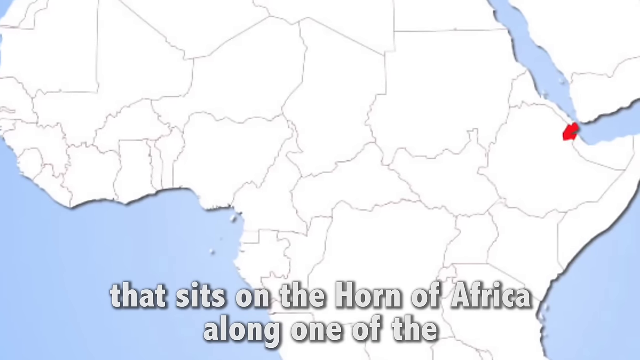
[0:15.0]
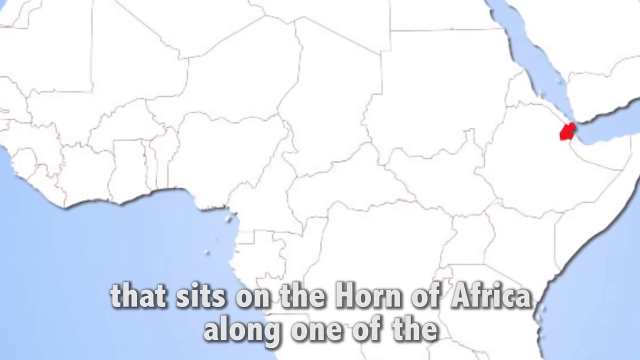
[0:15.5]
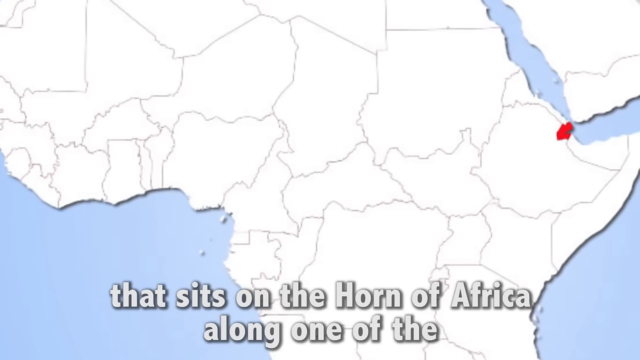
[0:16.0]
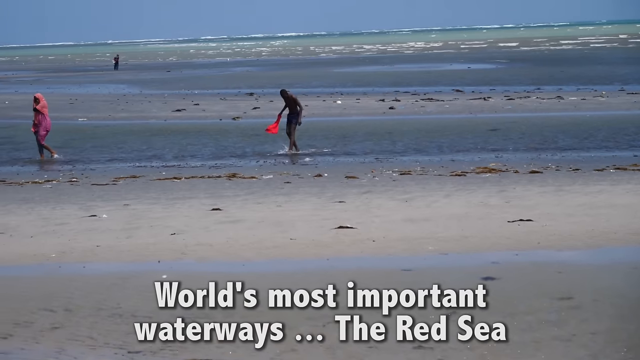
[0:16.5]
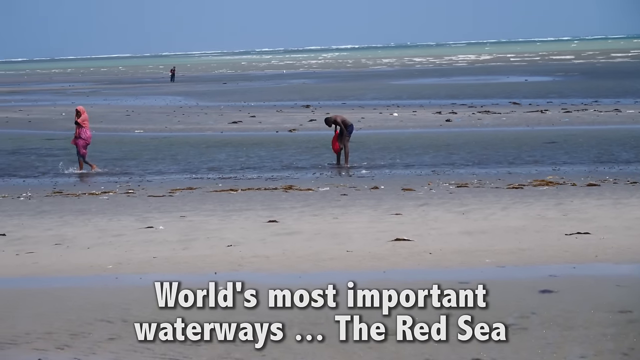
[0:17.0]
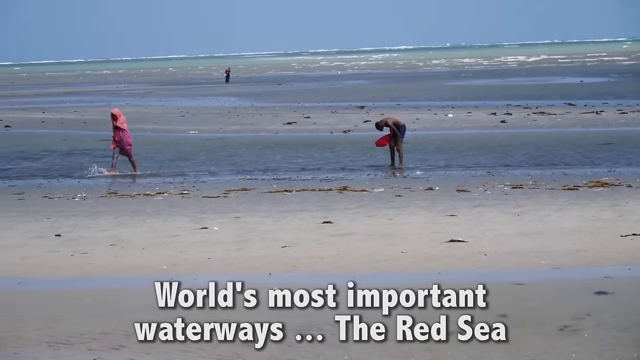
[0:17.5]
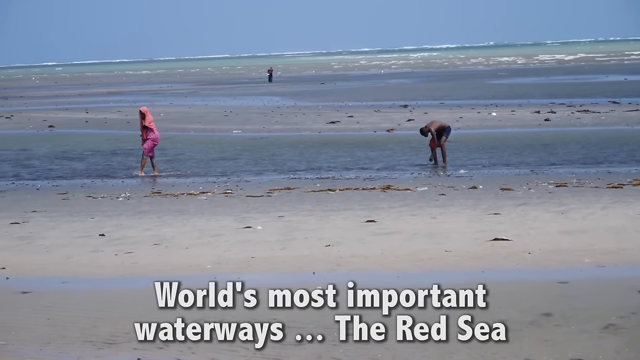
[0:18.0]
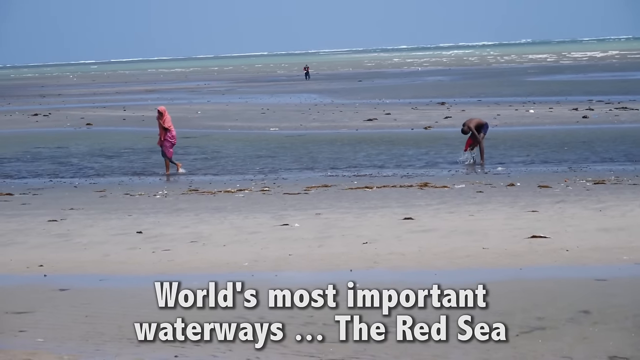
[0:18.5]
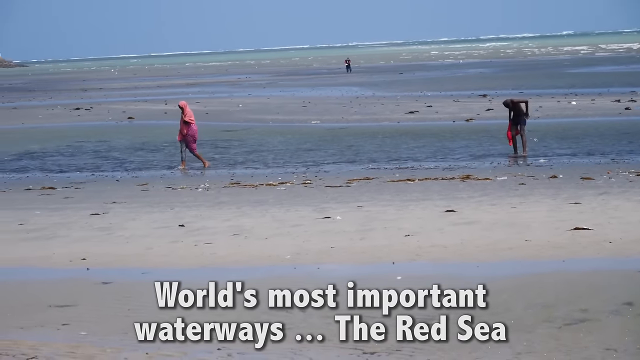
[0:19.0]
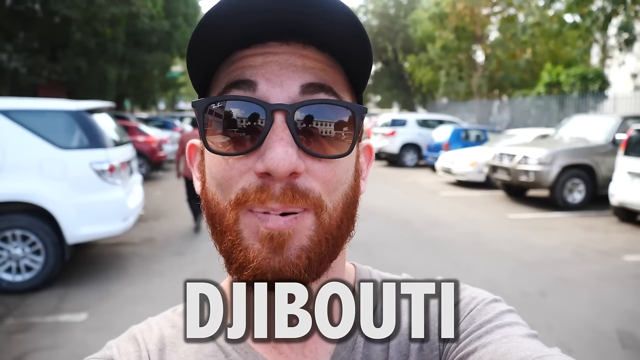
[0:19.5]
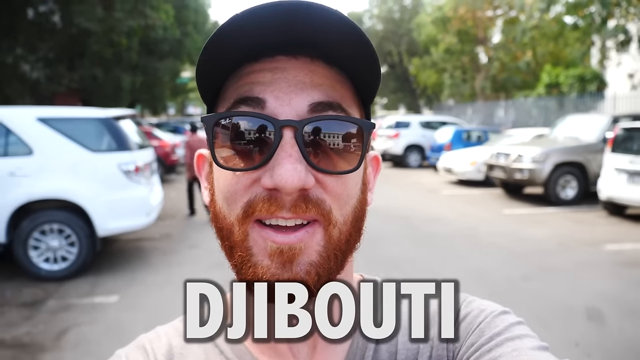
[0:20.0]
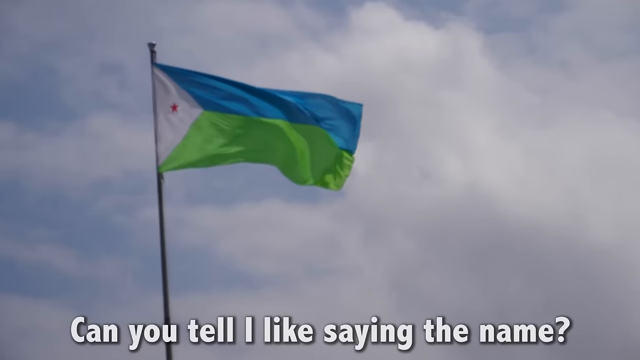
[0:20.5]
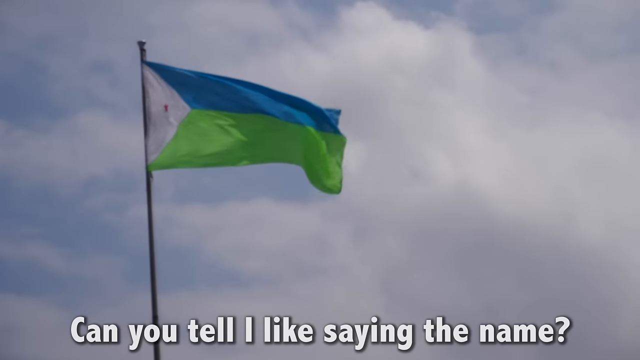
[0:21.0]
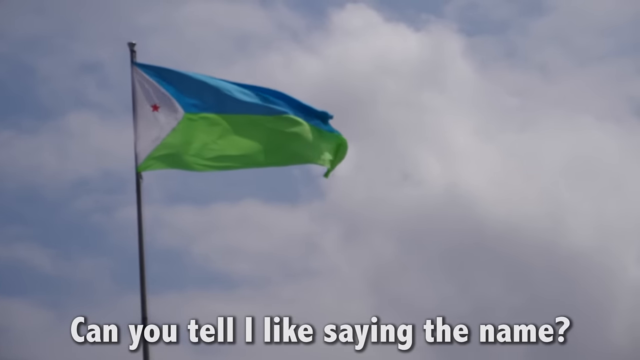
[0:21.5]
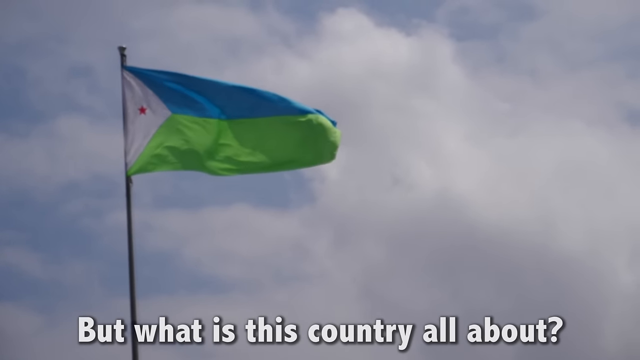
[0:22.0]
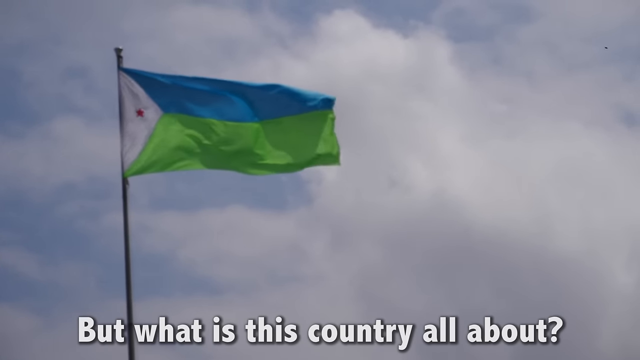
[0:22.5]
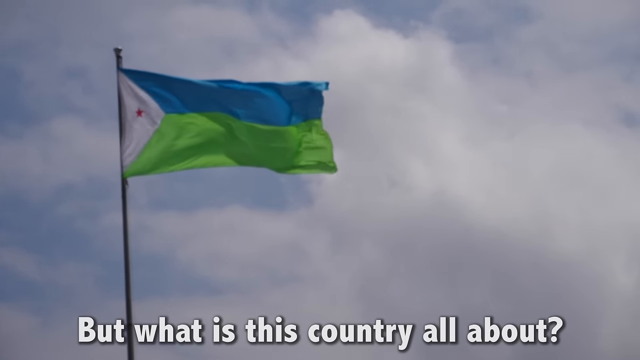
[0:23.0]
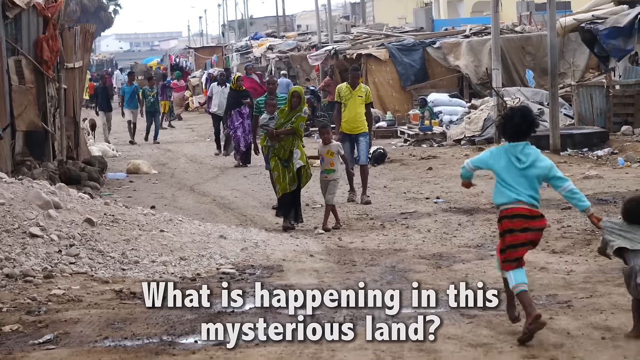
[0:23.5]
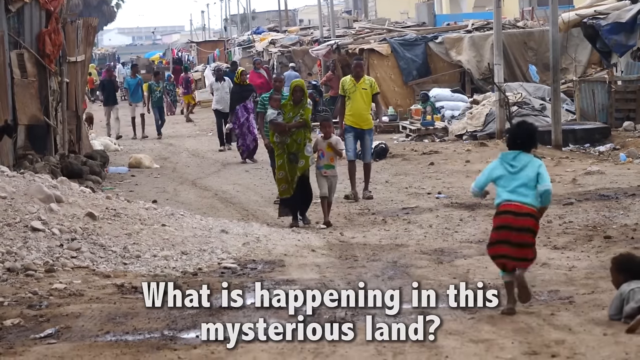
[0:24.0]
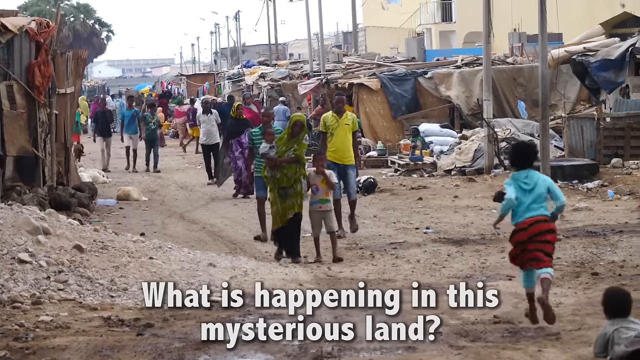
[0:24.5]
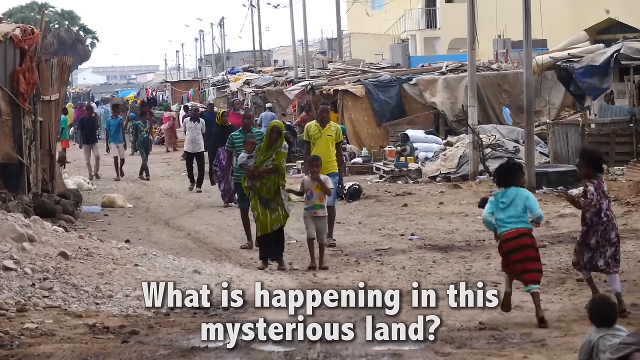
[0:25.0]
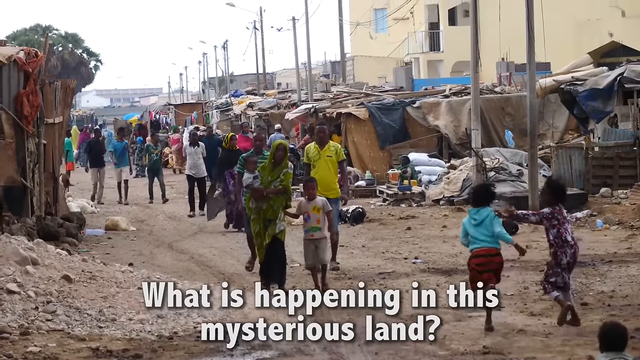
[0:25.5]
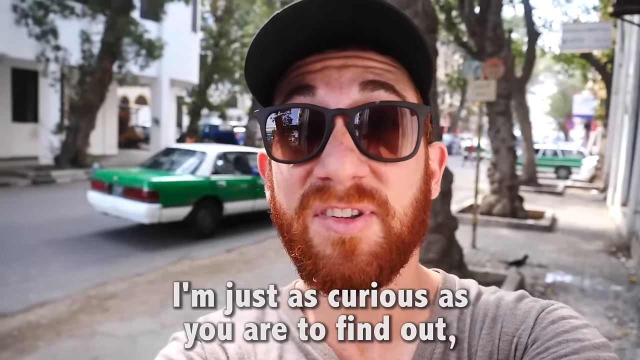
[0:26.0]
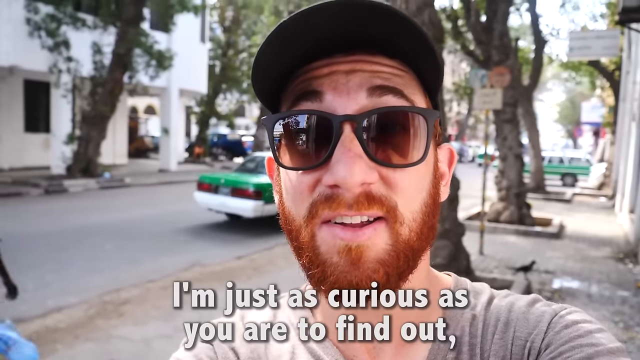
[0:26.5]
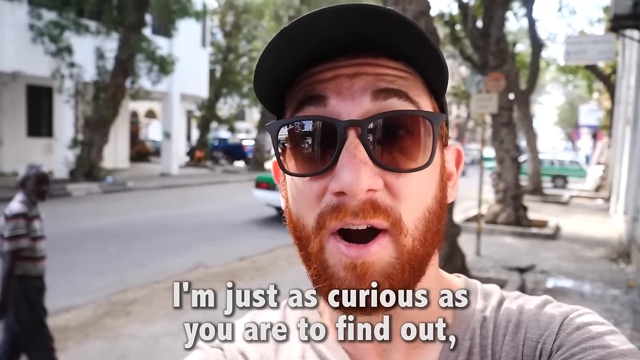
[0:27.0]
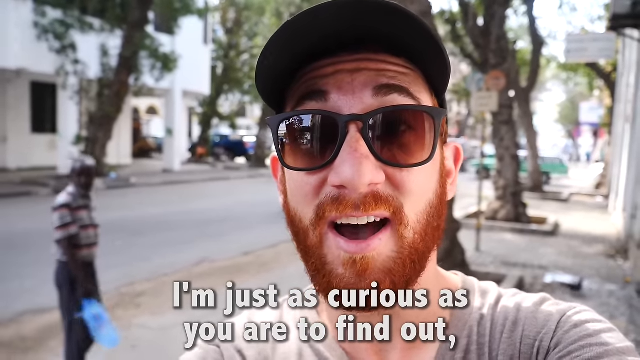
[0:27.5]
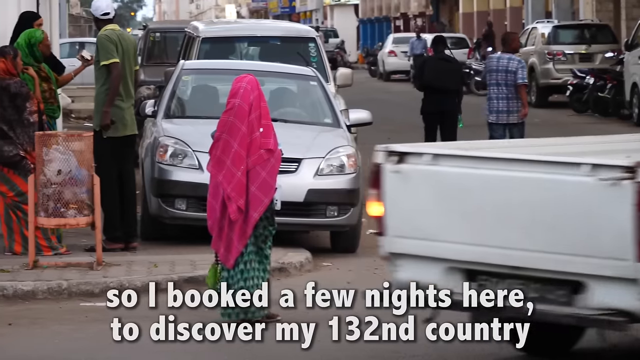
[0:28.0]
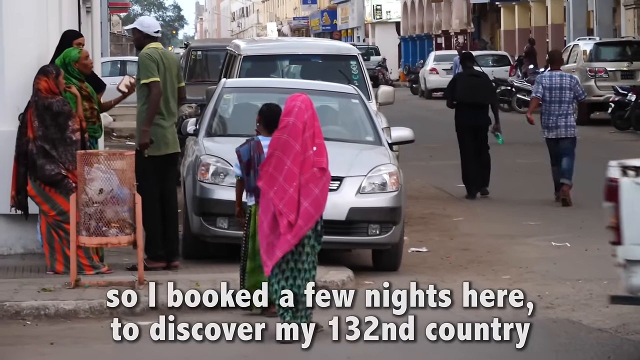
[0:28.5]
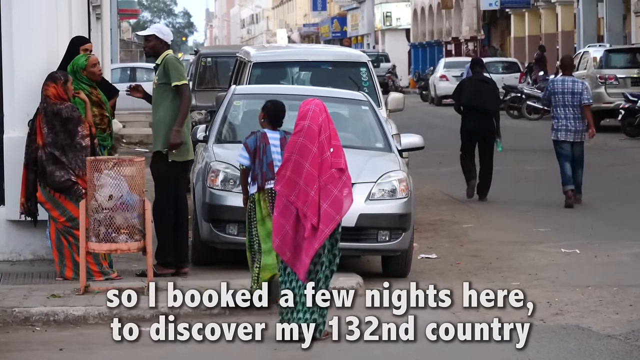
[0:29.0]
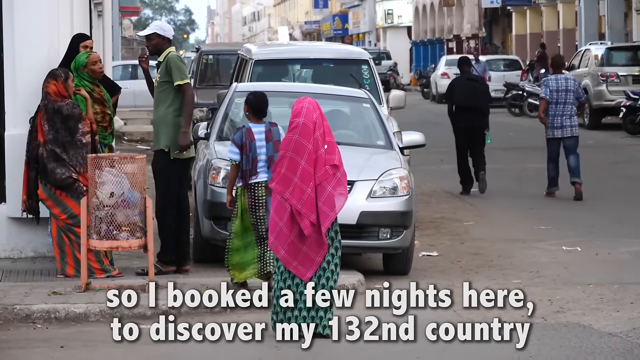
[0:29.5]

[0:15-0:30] A white map of Africa appears, then the view pans to a picture of a beach where a couple of people are walking. The man with the red beard appears, again wearing sunglasses and a hat. Text says they are at the Red Sea, and a picture of the country's flag is shown. The country looks poor. People walk in the streets all around, and there appears to be a dirt alleyway full of people, with young children running around barefoot. A "Drew Binsky" logo is in the right-hand corner. Text says he has booked a few nights in this town and mentions "what is happening in this mysterious land."